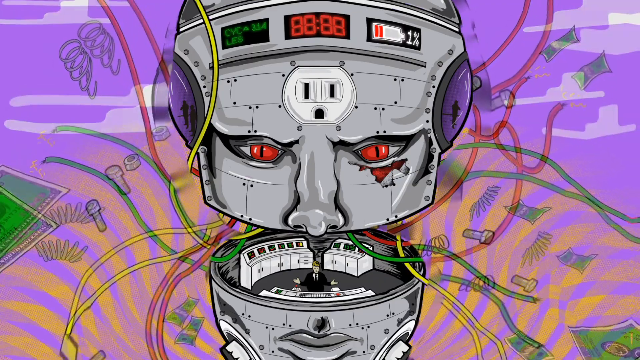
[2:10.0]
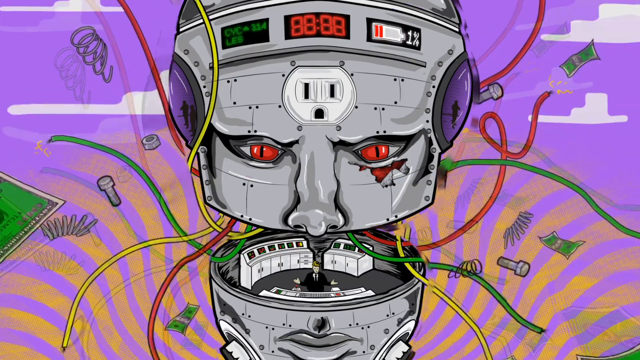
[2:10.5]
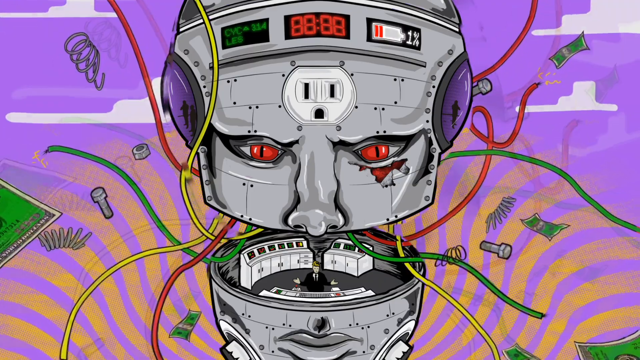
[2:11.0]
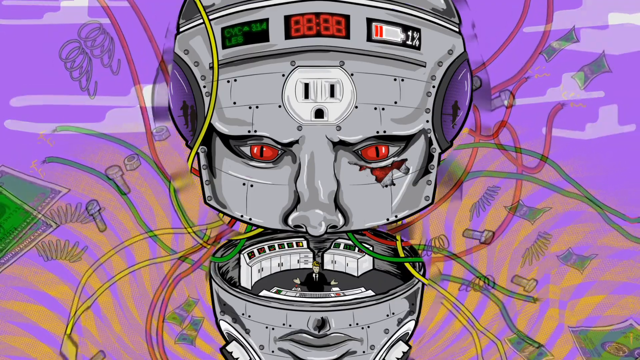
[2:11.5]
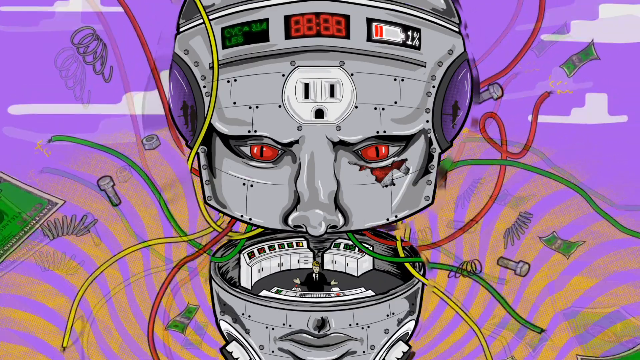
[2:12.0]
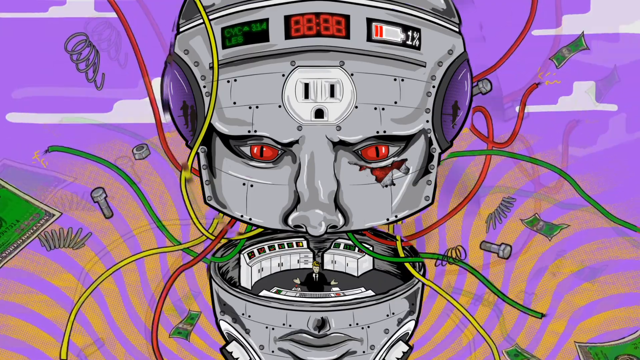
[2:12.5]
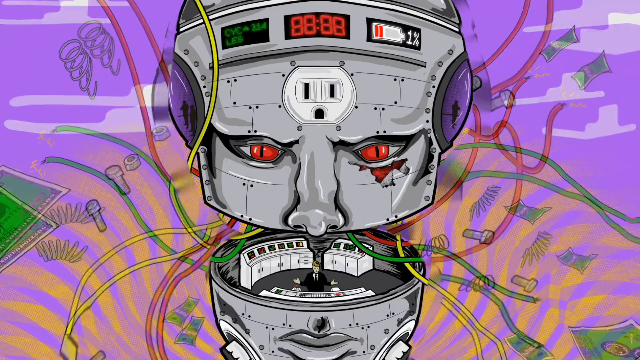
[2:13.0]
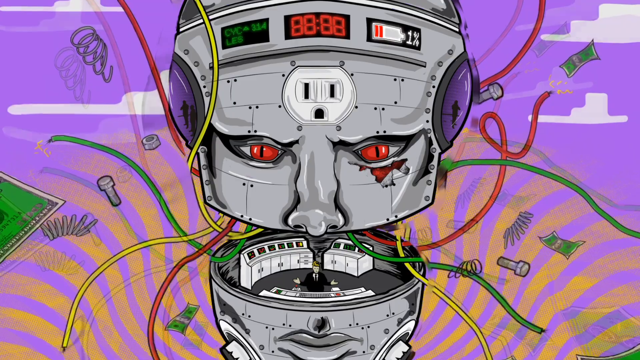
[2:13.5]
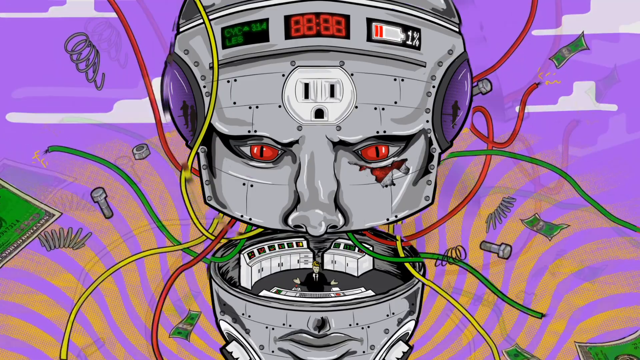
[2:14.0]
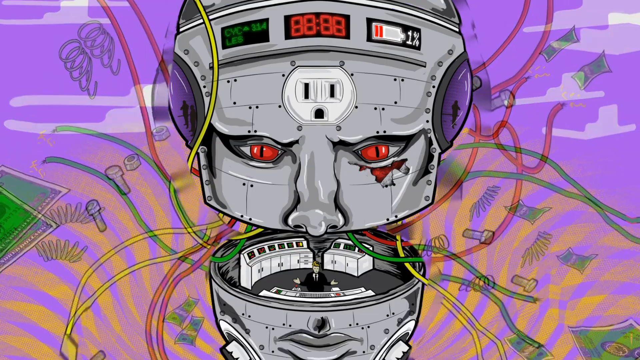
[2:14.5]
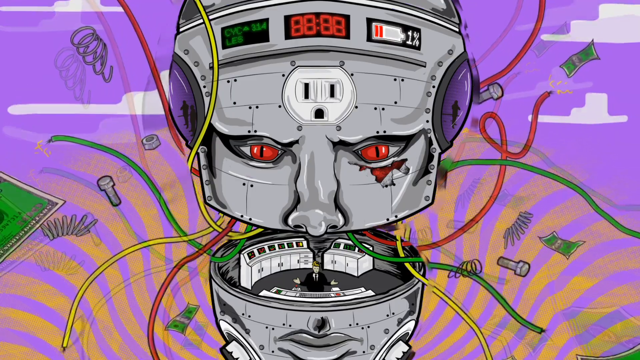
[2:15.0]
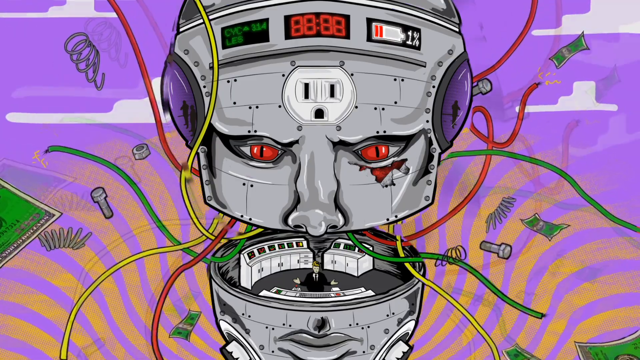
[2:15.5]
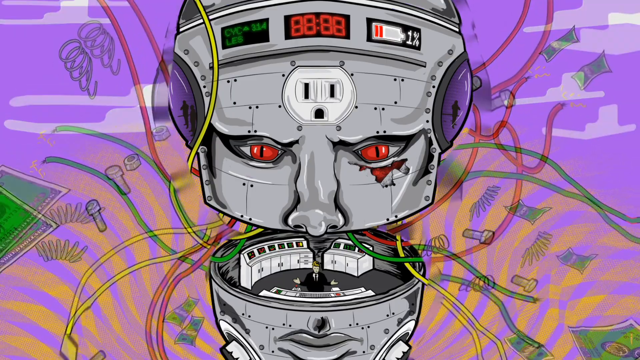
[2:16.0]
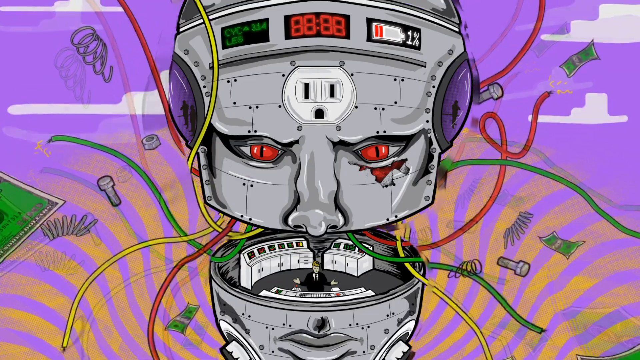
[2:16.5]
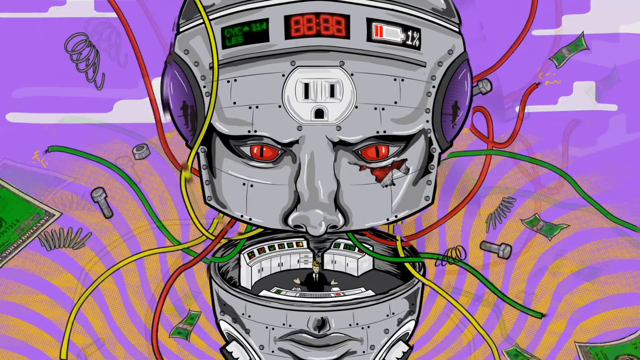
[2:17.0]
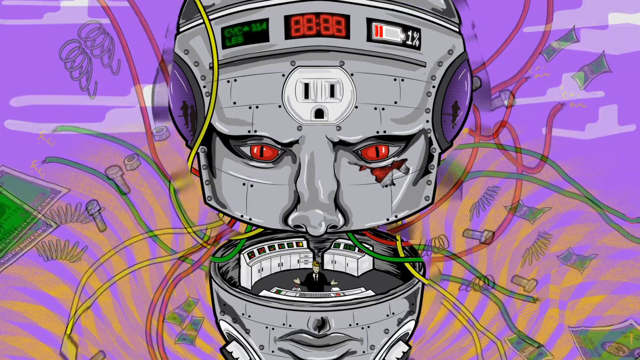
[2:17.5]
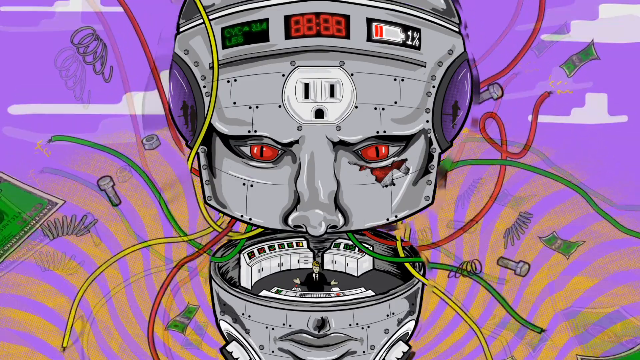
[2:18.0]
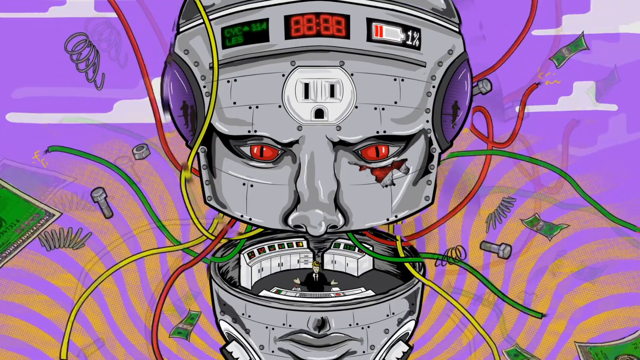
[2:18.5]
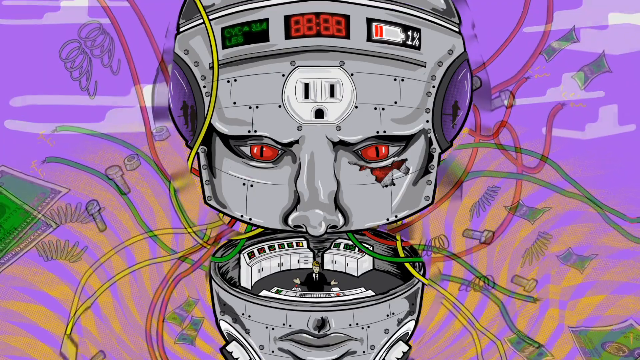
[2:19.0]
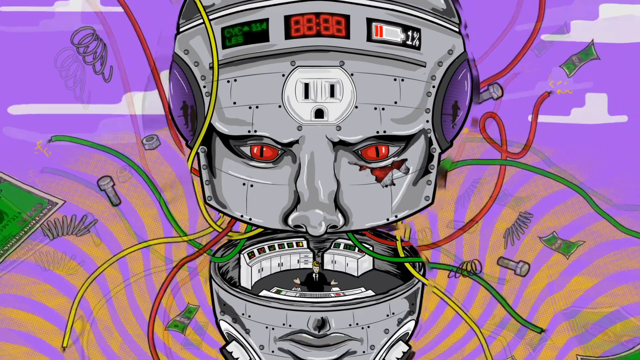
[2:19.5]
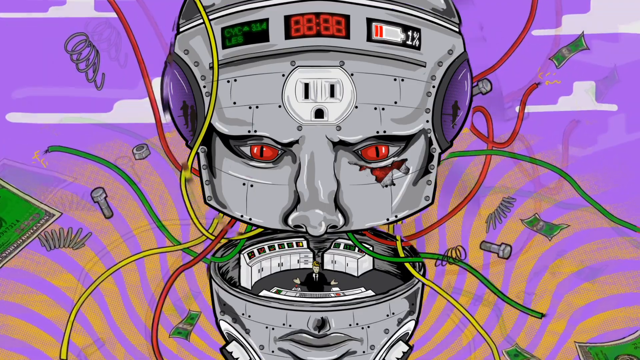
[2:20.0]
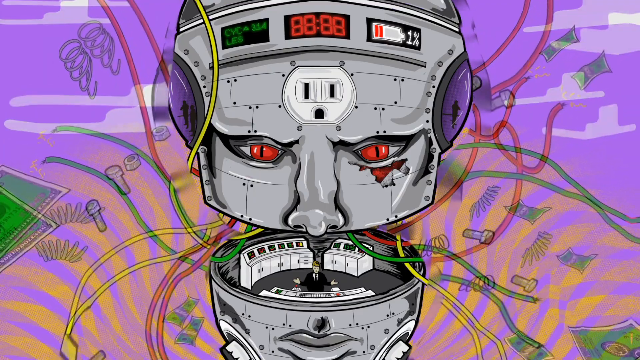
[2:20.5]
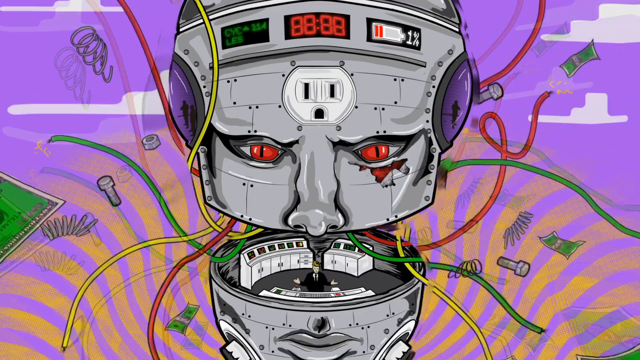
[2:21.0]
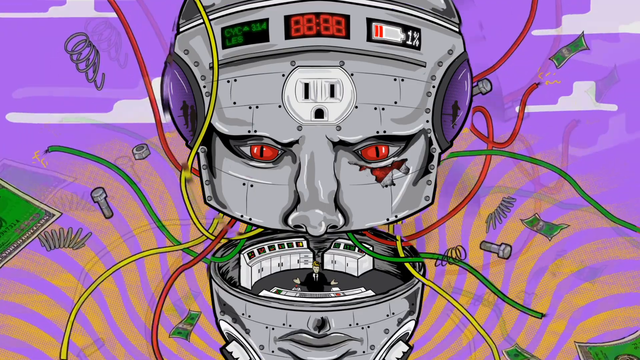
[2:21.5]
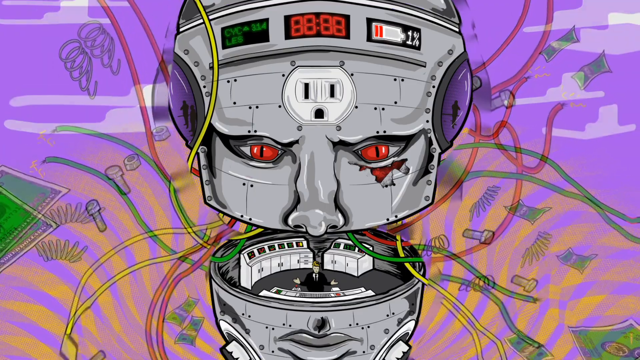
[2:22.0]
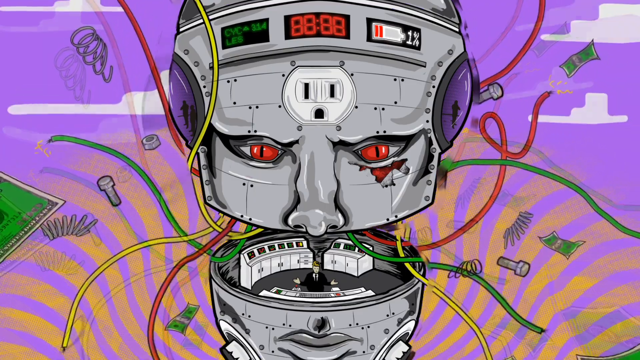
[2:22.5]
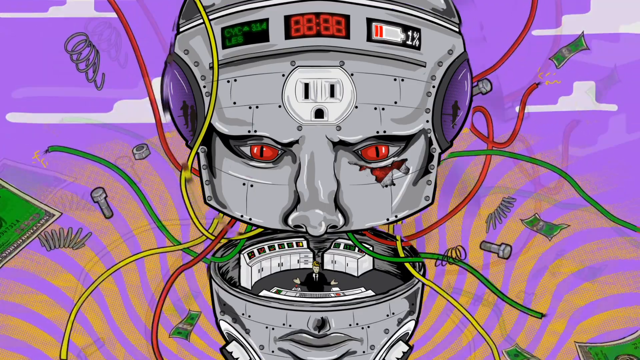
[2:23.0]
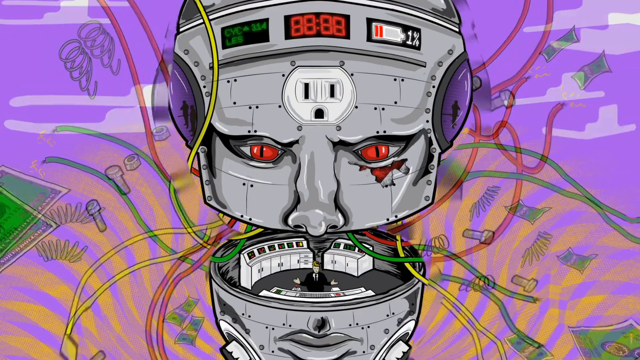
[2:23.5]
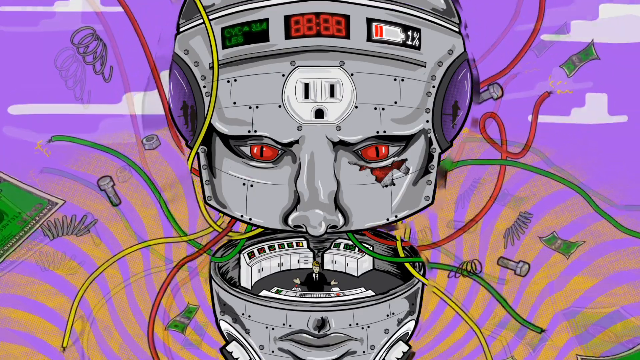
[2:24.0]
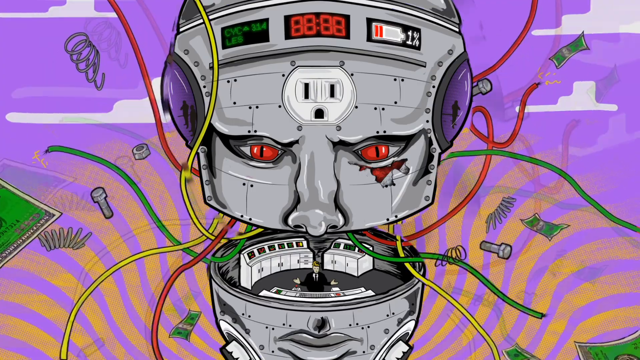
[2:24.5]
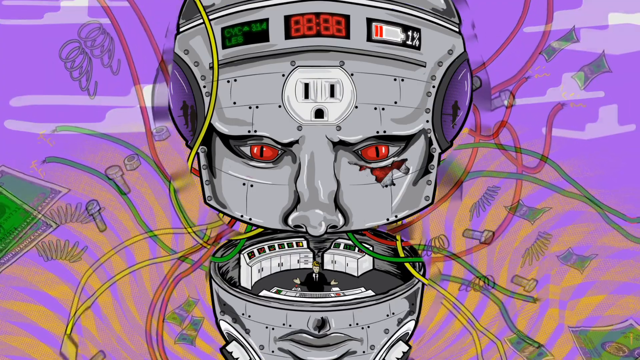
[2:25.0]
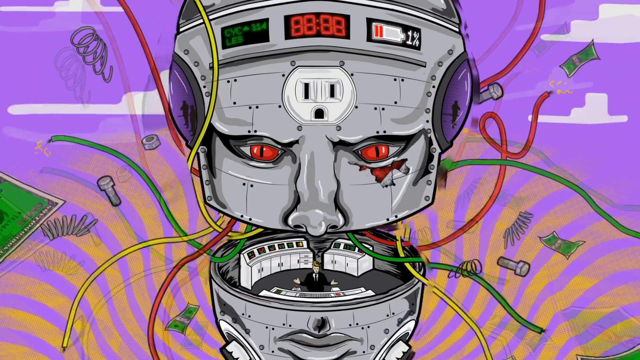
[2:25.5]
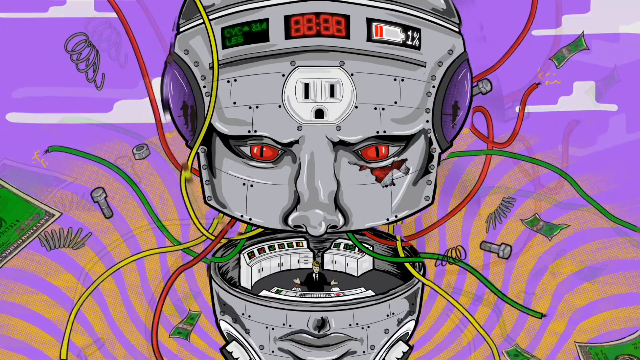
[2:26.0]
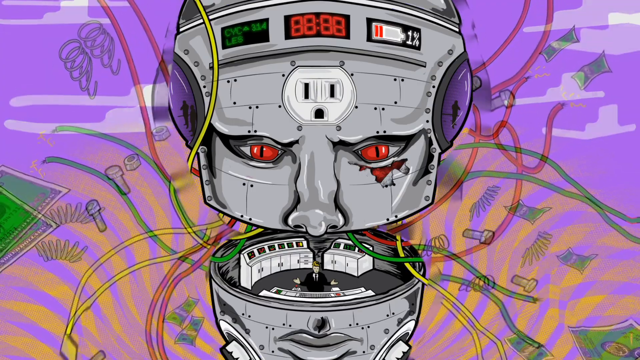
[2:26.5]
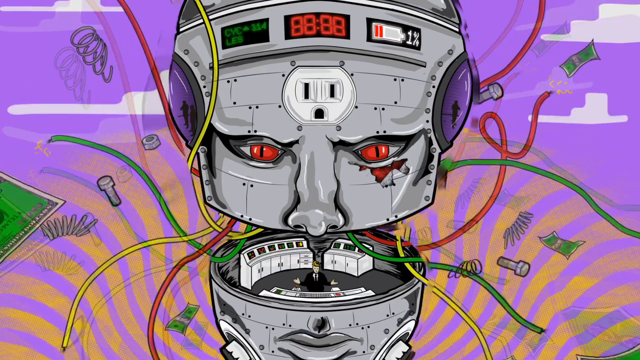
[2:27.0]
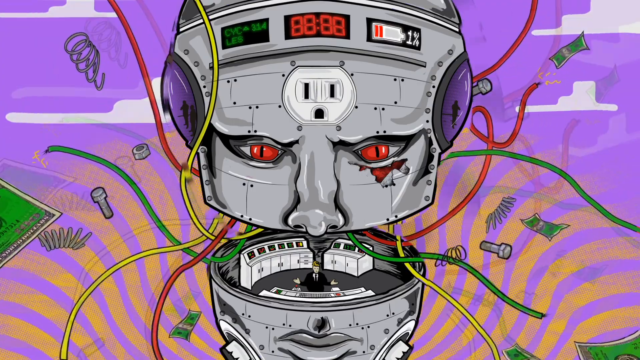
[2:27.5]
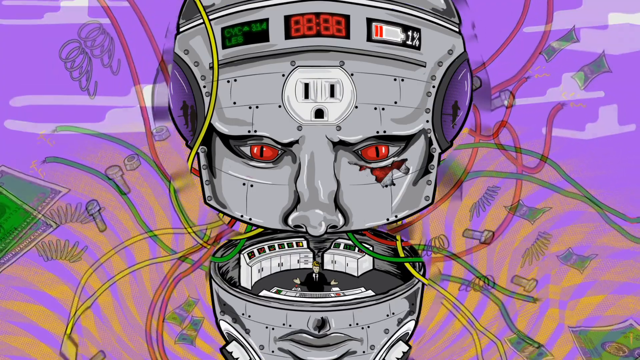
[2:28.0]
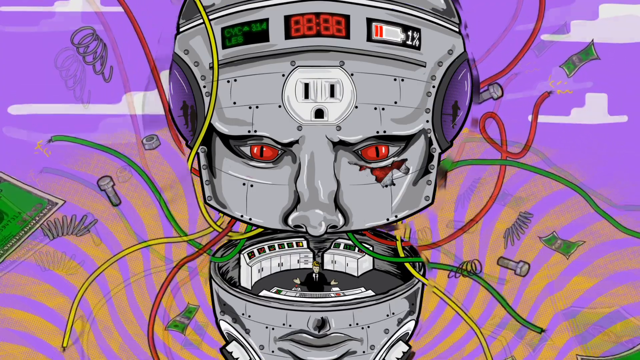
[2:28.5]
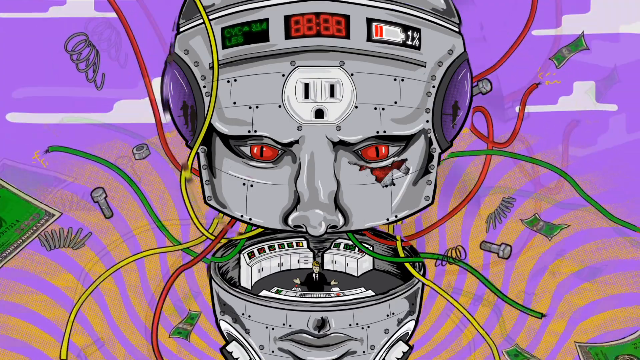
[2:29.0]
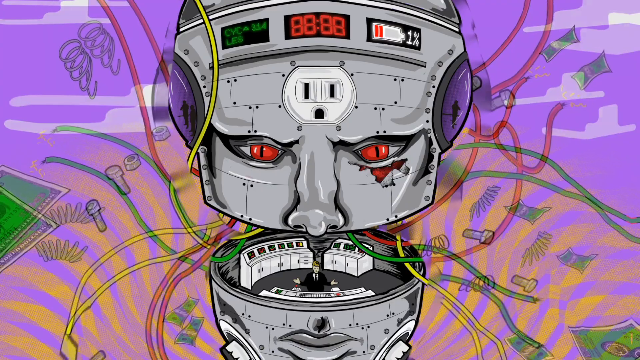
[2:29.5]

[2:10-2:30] The same robot head is stationary in front of a moving purple background with white clouds, where yellow wavy lines move counterclockwise and springs, bolts, washers and dollar bills fly around. Yellow, green and red wires come out of the robot's head and look live, with electricity coming out of the ends. A man in a black suit and black tie stands in a control room in the middle of the robot head, which has white machines, with his hands facing upwards. The bottom of the head has a mouth; the top has a nose and two eyes. The eyes are red and the skin is gray, with an injury under the robot's left eye, the right eye as viewed. A large white American-style outlet is in the middle of the forehead, with a clock above it reading "88;88". To the left of the clock is "314 cycles", and to the right a battery power indicator shows 1% battery power left. The robot head stays stationary throughout the video.